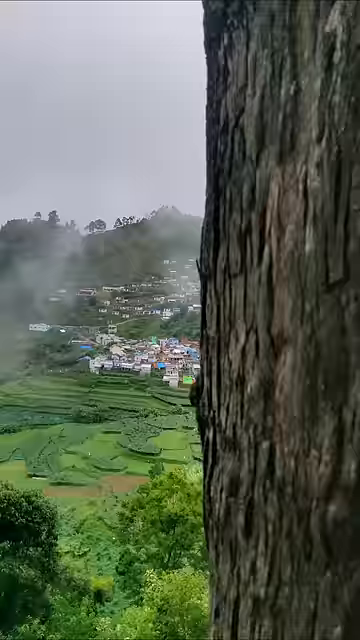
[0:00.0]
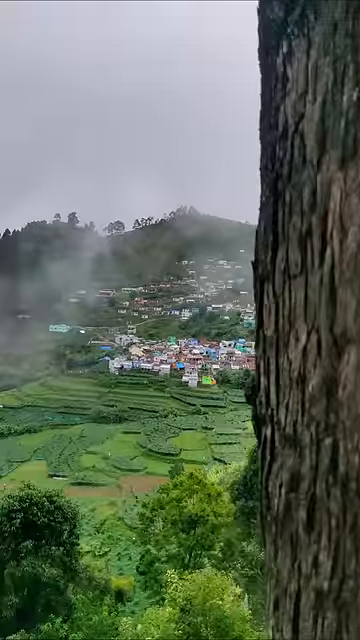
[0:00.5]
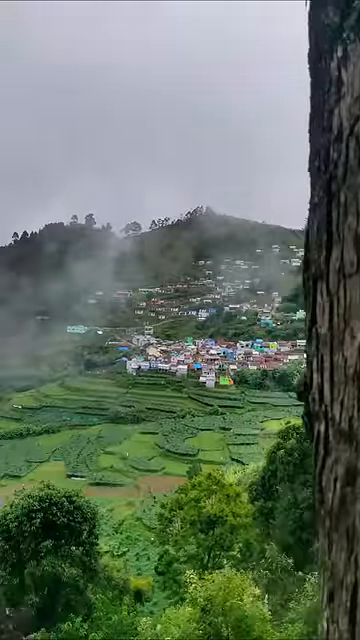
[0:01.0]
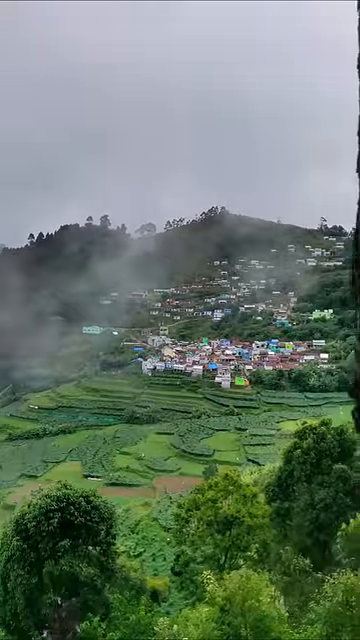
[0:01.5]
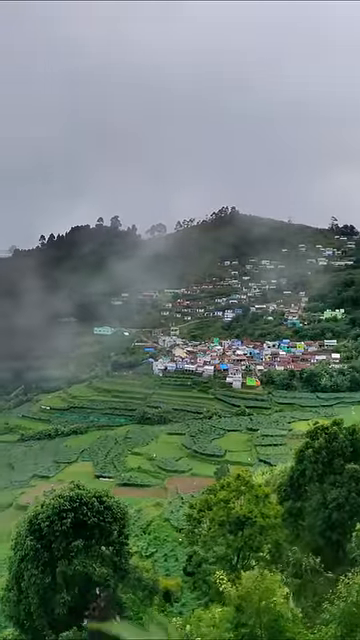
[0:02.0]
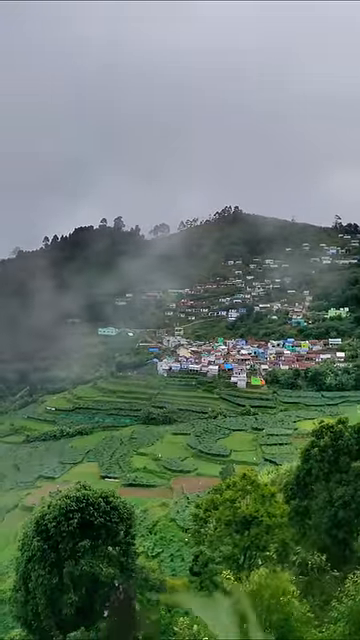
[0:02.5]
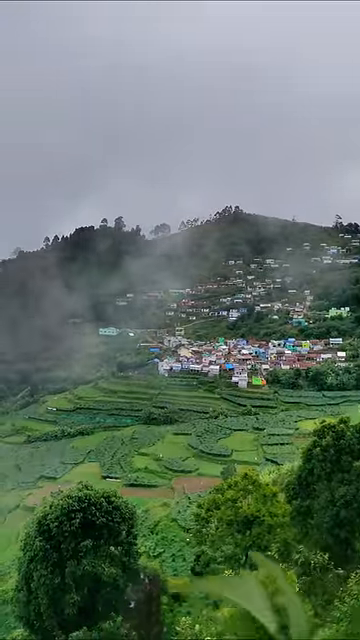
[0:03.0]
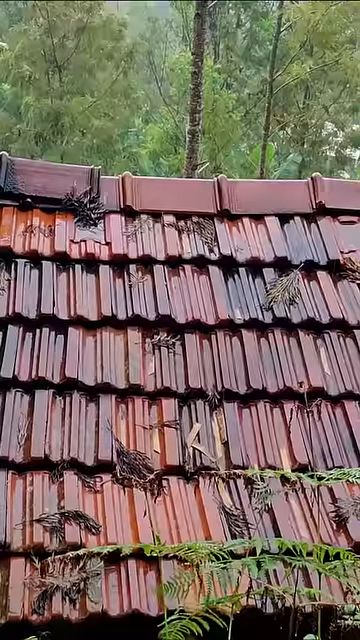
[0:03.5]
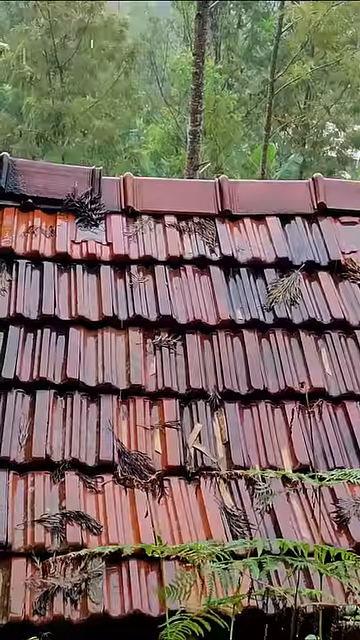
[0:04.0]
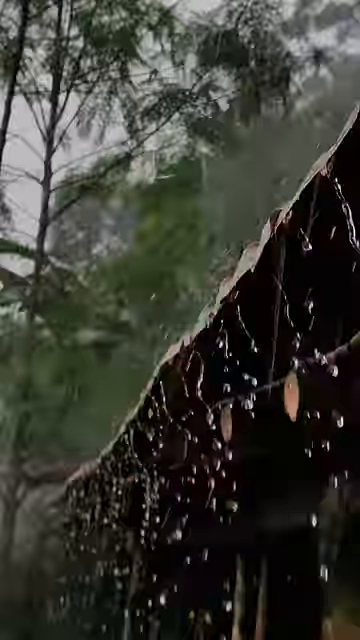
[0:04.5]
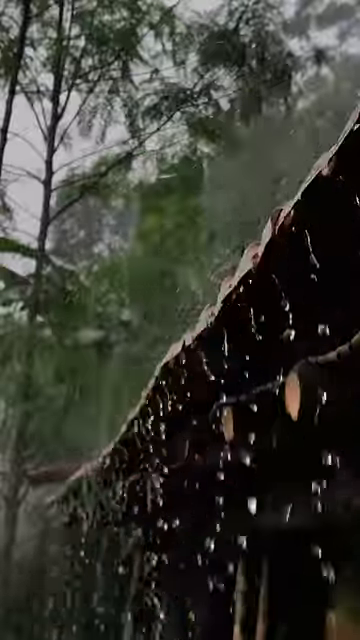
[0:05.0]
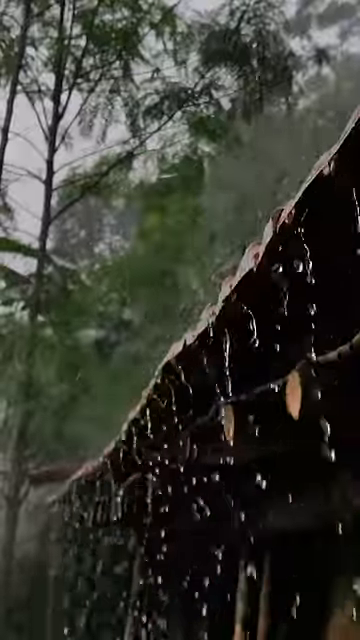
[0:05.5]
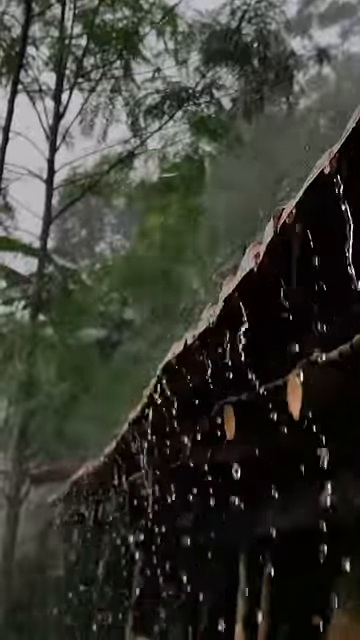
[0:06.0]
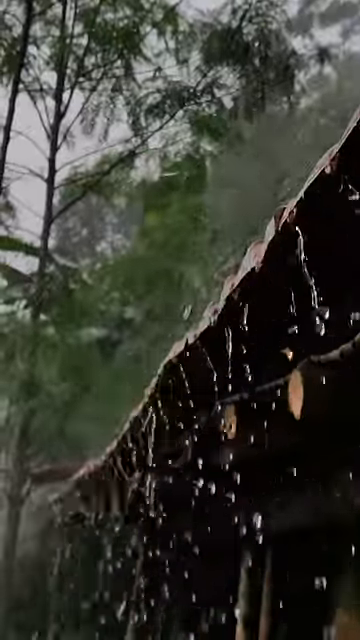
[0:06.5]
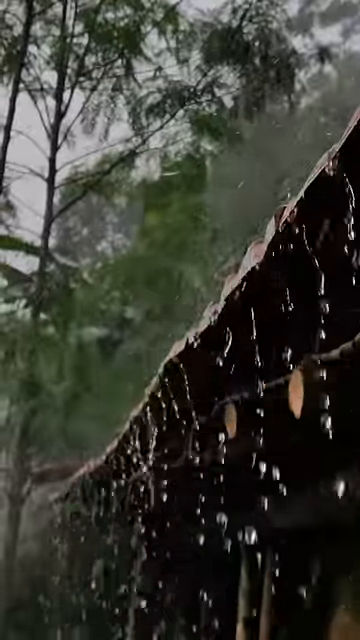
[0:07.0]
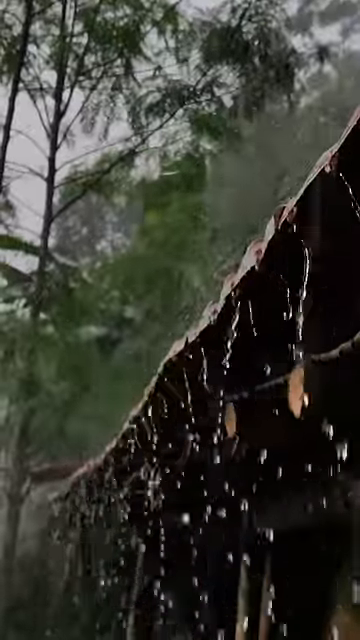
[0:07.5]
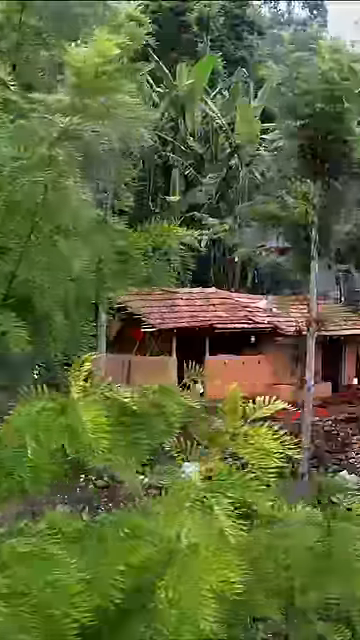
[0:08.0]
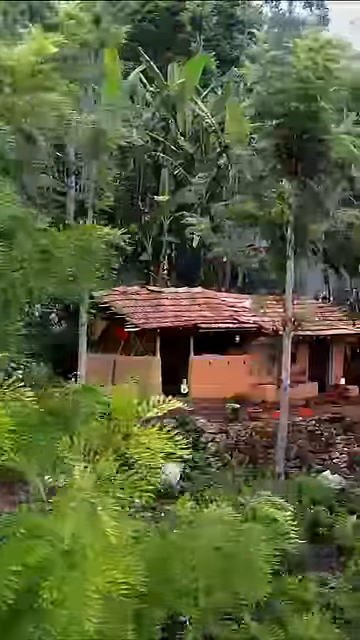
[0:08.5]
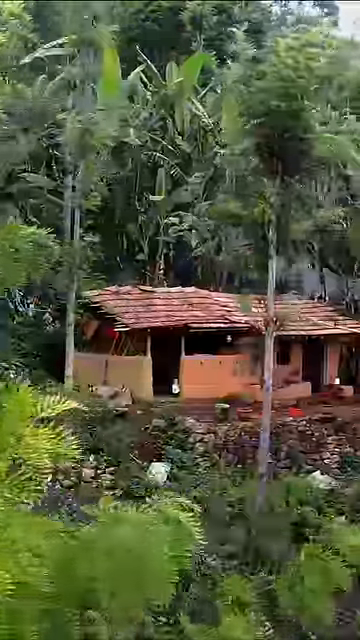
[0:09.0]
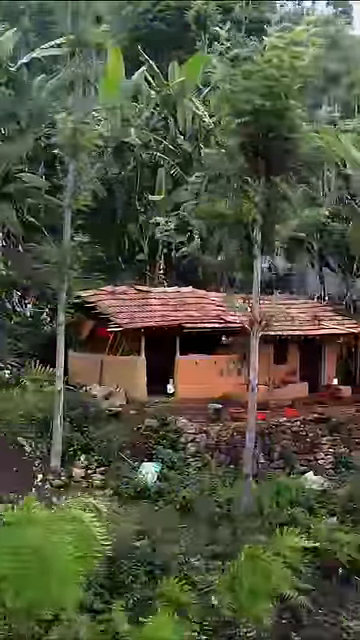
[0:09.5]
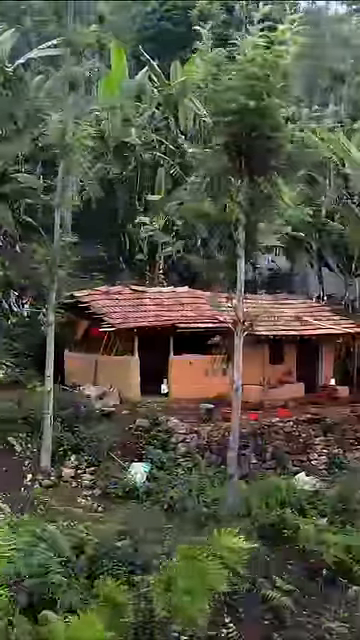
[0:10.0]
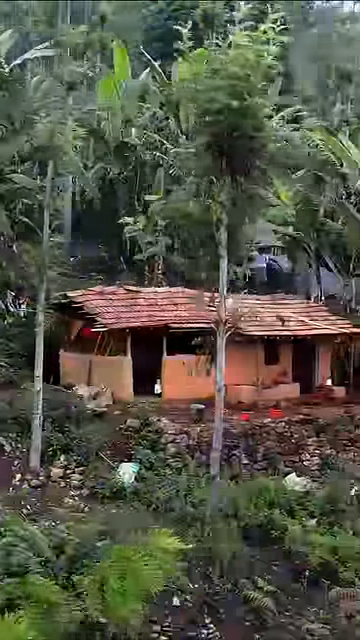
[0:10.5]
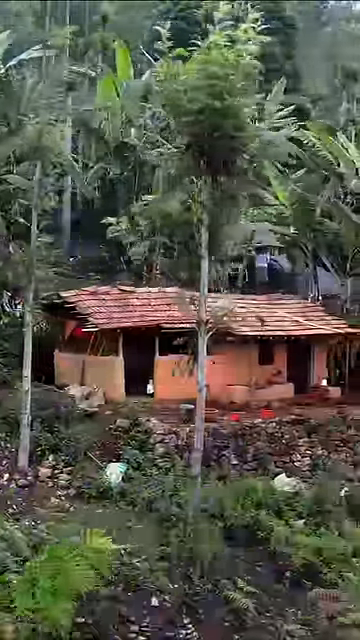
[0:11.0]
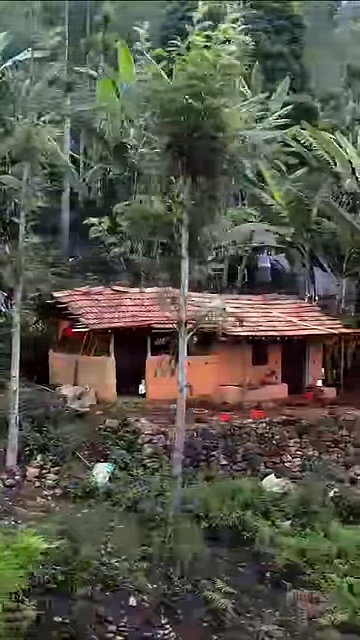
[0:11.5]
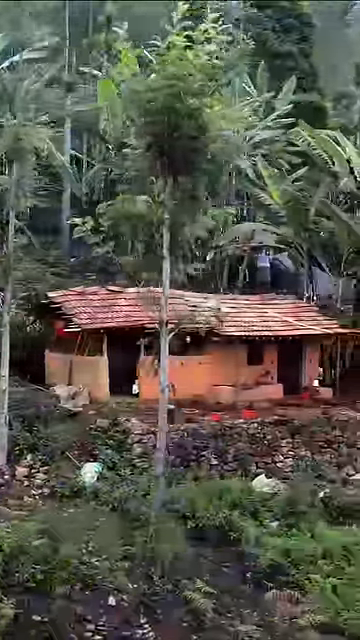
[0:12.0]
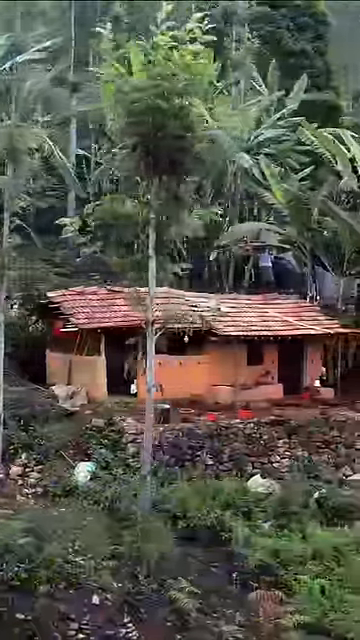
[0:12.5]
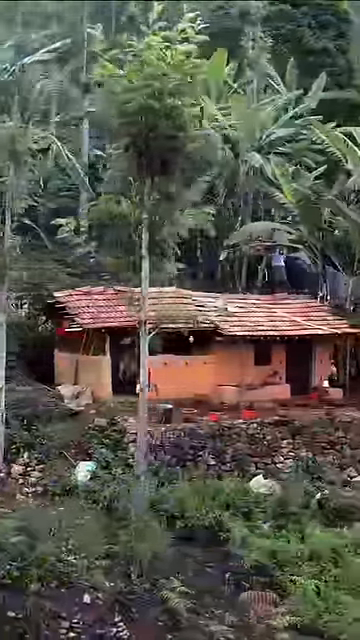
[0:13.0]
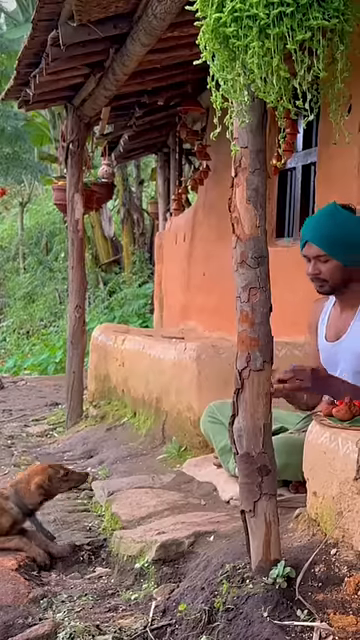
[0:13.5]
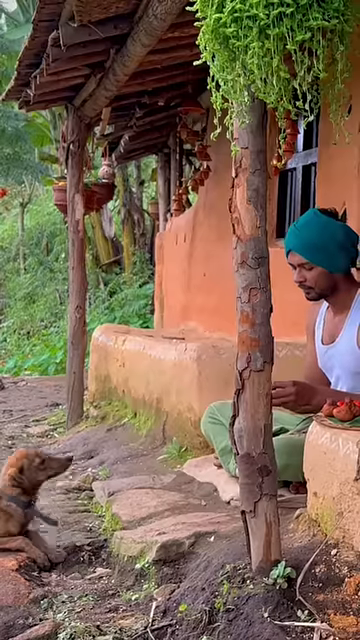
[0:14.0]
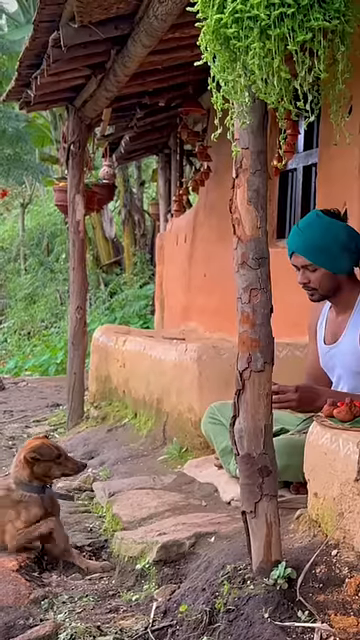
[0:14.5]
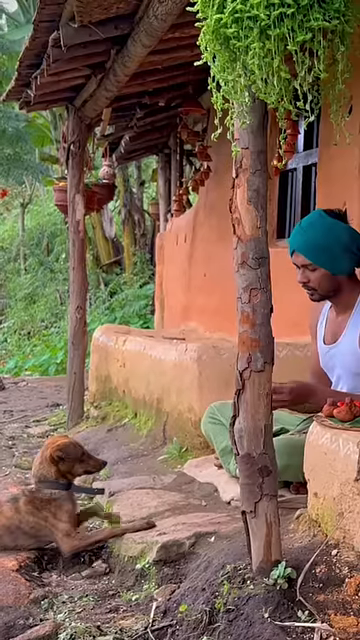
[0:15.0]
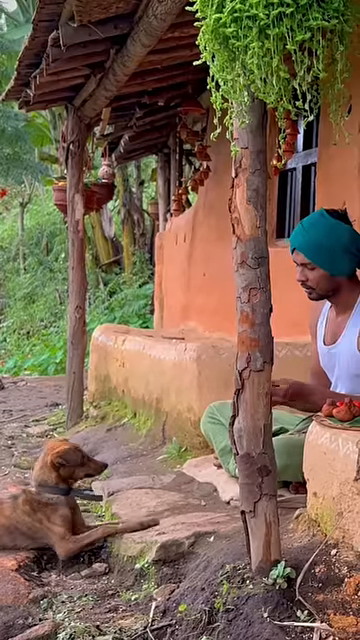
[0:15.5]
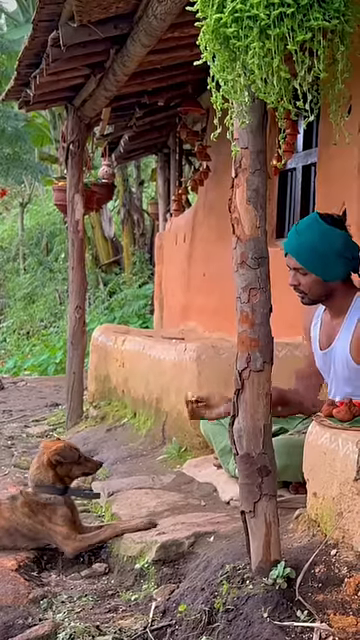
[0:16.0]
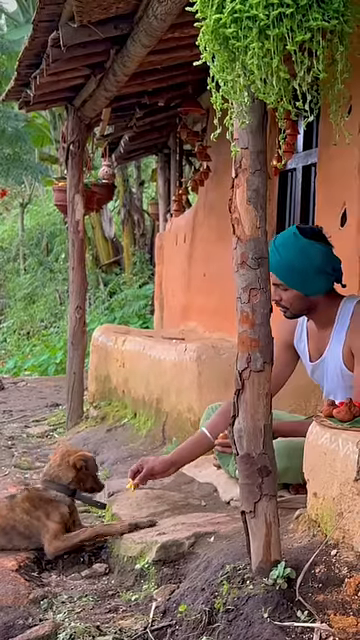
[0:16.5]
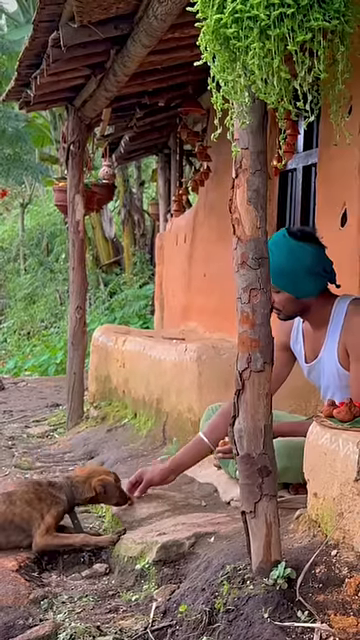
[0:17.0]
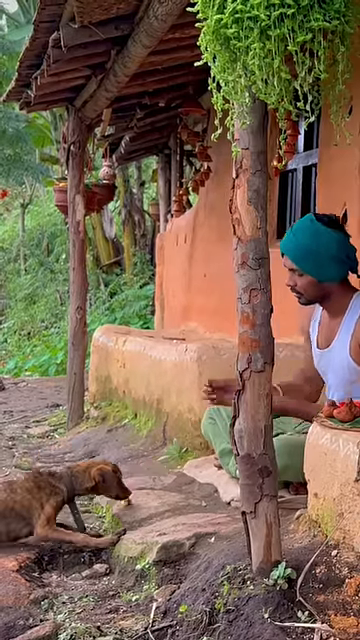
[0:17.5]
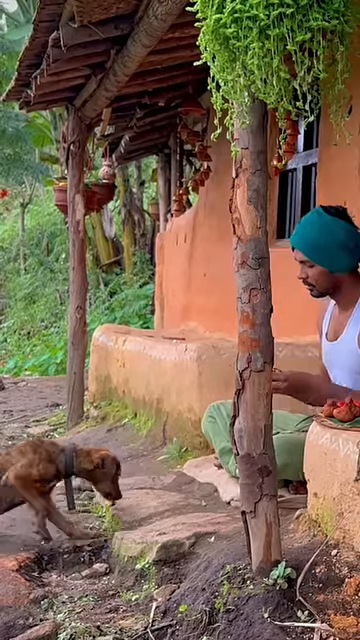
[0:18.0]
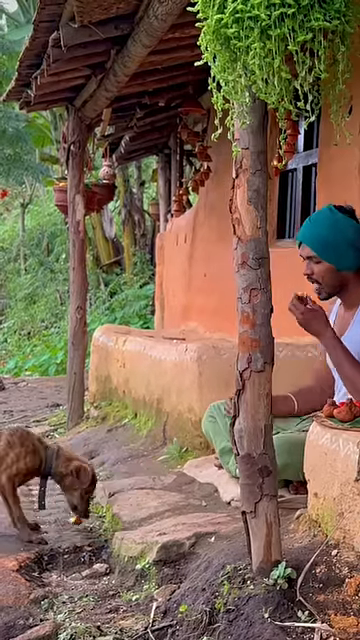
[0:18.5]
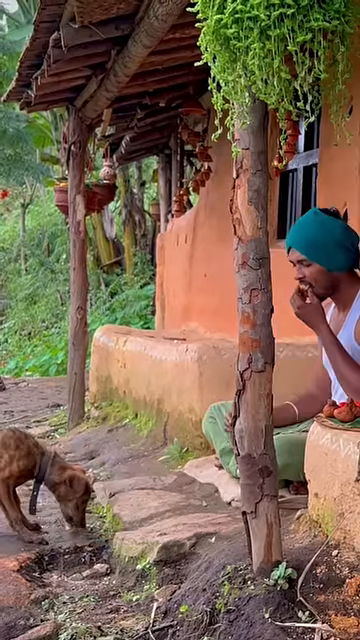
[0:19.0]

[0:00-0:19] Apparently an ASMR-type video of what it is like to live in the mountains. There are four people in a third-world country, and a woman feeds a very skinny stray dog. The setting looks very green and seems to be a rainforest where people live; it is very rainy, and people live in huts or hut-like structures. The shingles on the structures look very well done. The climate is visibly wet and damp, and all of the trees are very green. The person in this location looks like they are thriving. Far away, on a different mountain, several houses or buildings are clumped together, while this person's area is secluded, with just them and their dog. The dwelling looks self-built, apparently from trees or logs, and it does not look professionally done but rather like an amateur's work. It looks like it has held up over time.